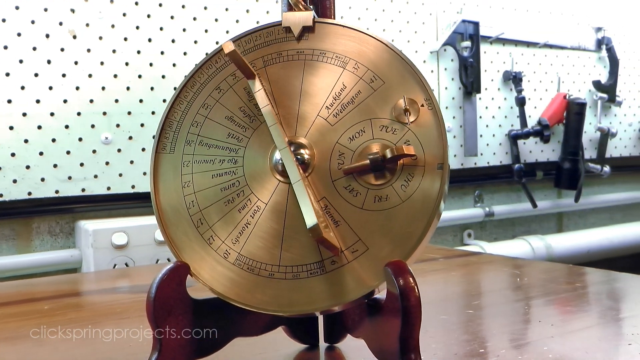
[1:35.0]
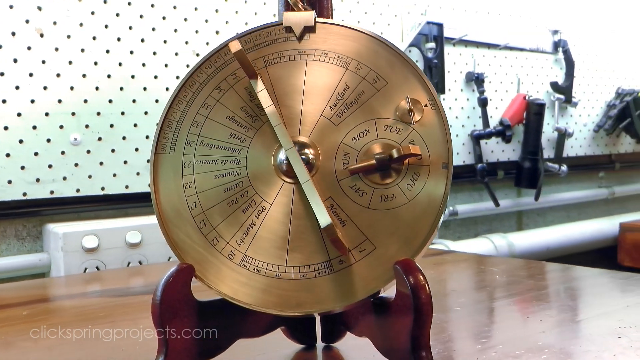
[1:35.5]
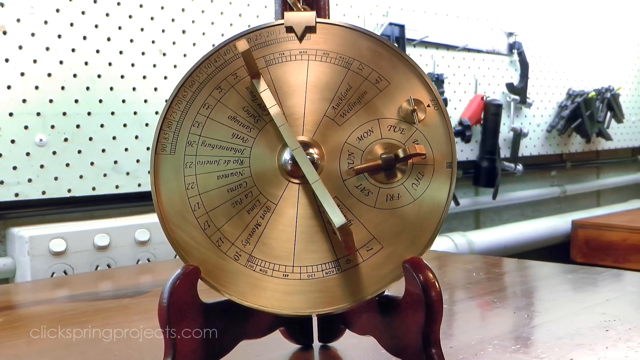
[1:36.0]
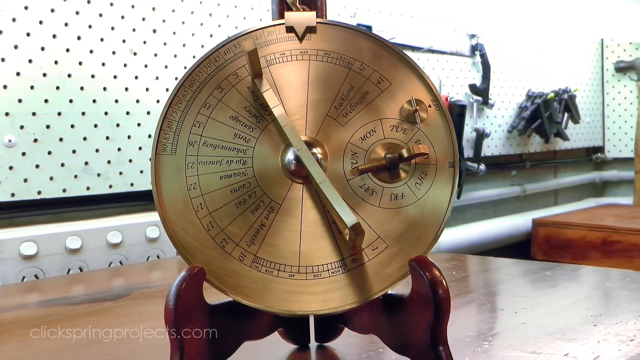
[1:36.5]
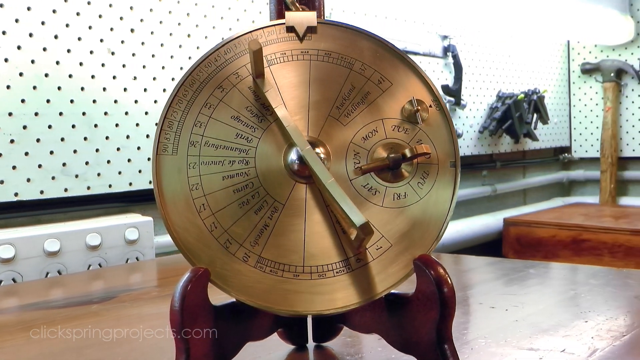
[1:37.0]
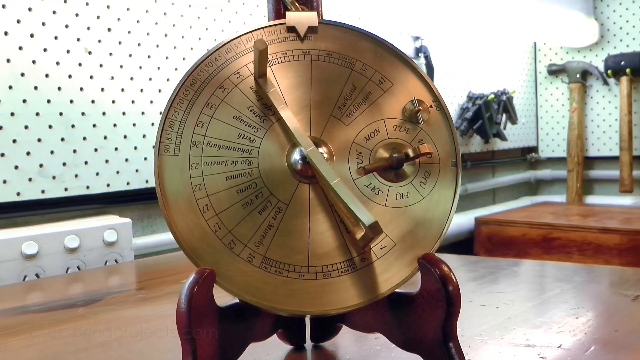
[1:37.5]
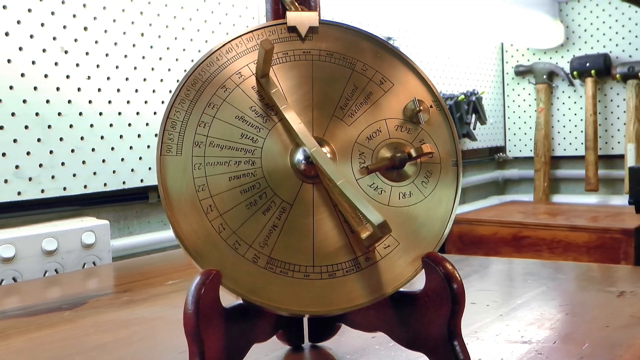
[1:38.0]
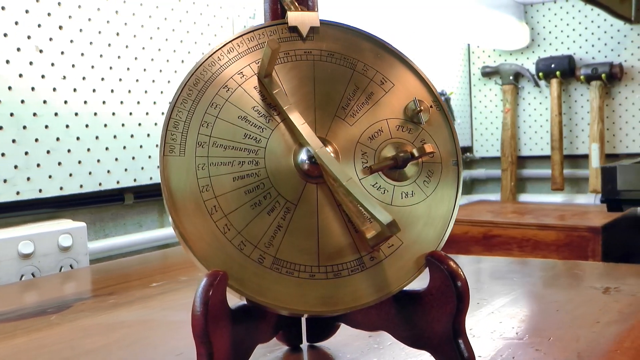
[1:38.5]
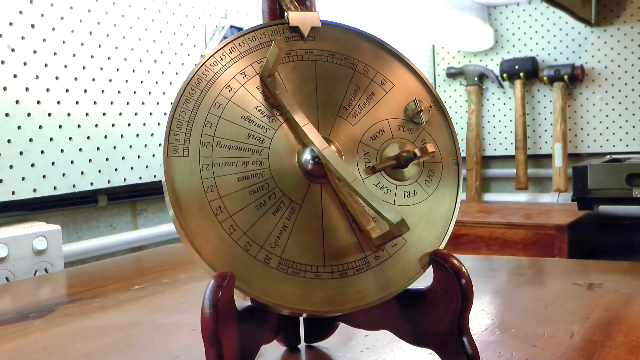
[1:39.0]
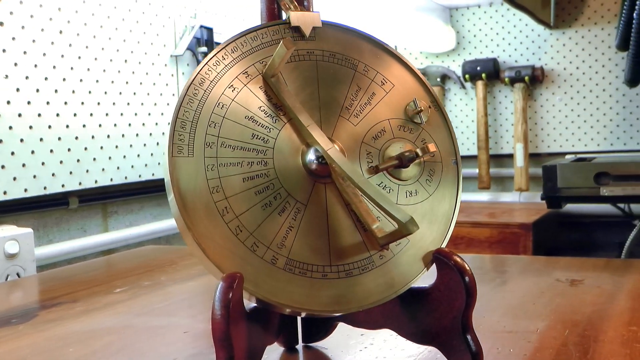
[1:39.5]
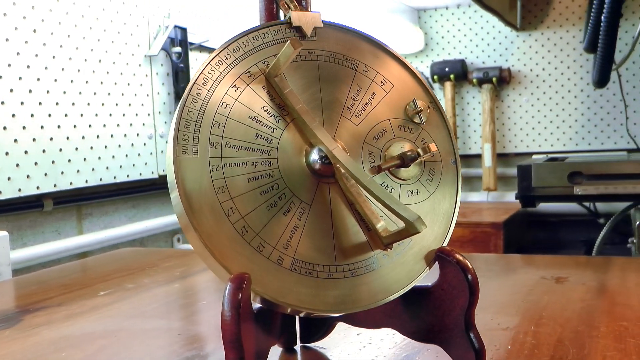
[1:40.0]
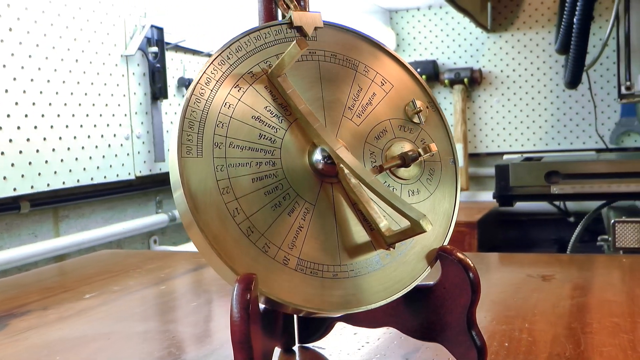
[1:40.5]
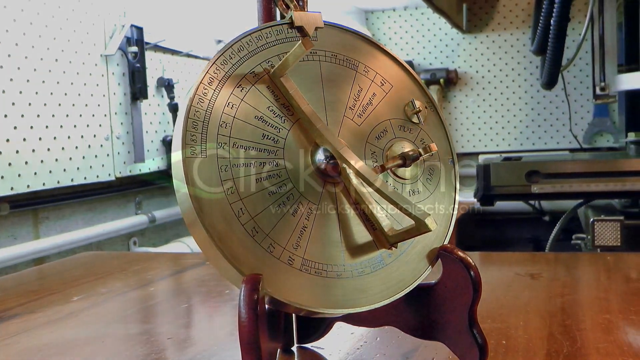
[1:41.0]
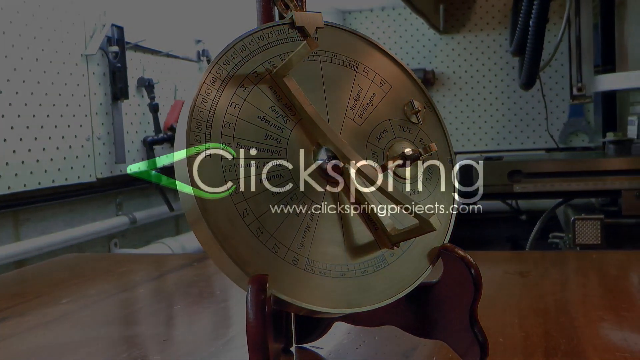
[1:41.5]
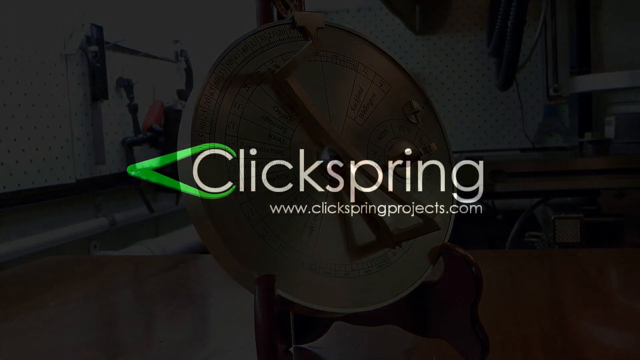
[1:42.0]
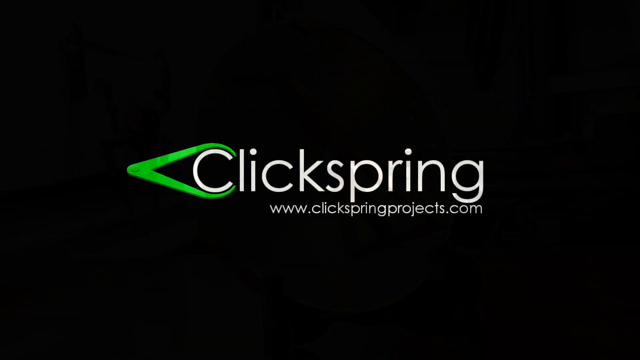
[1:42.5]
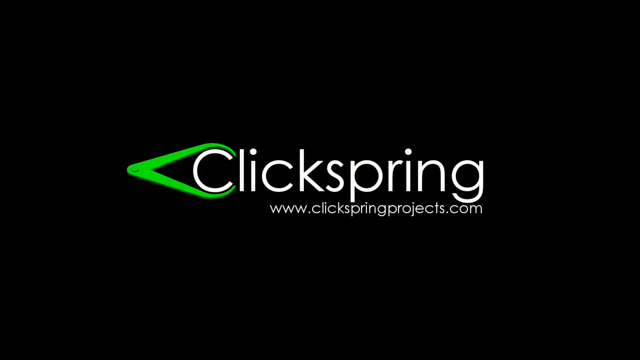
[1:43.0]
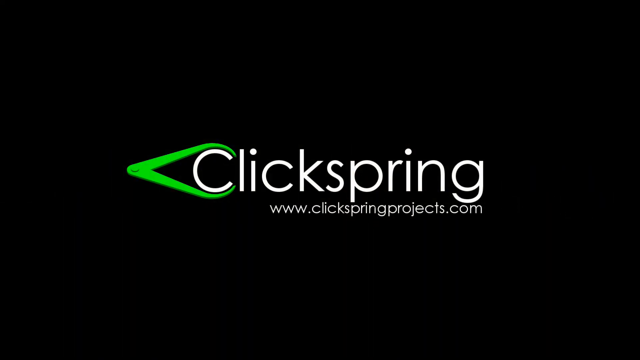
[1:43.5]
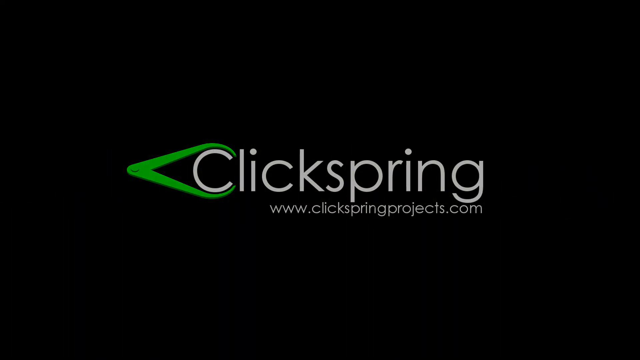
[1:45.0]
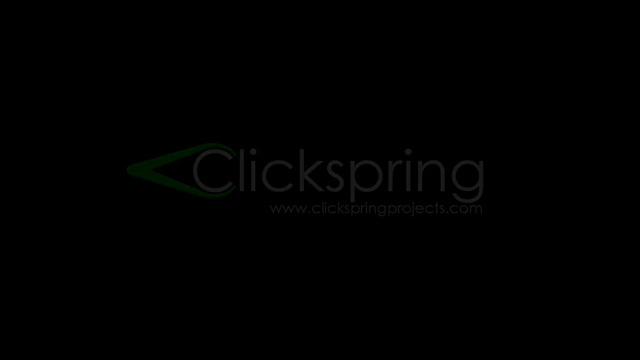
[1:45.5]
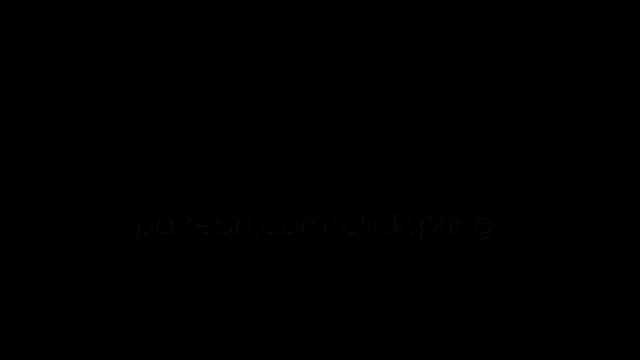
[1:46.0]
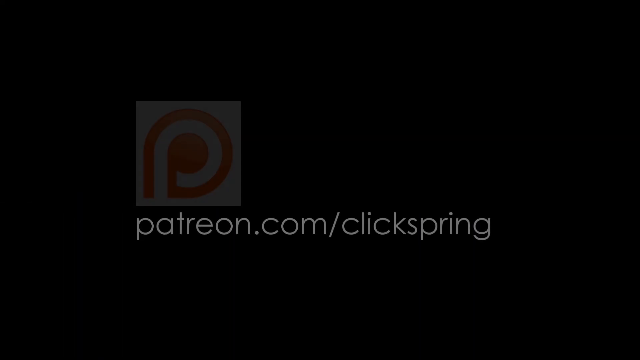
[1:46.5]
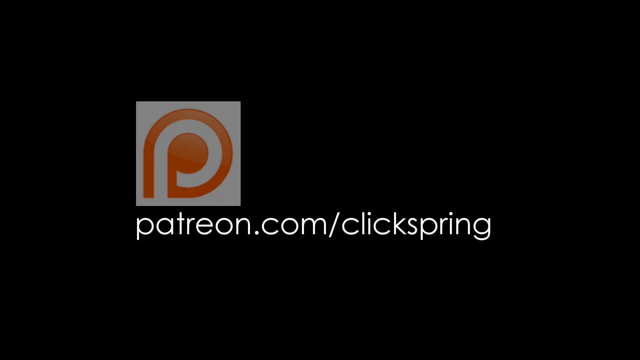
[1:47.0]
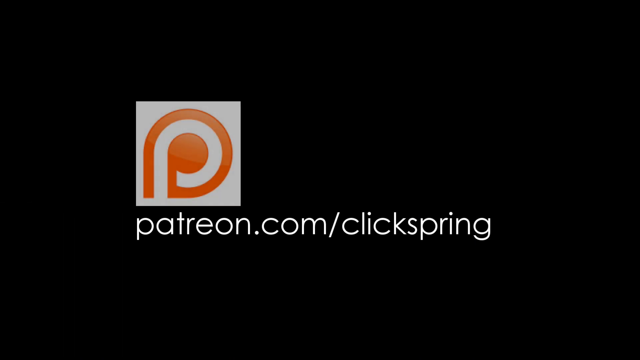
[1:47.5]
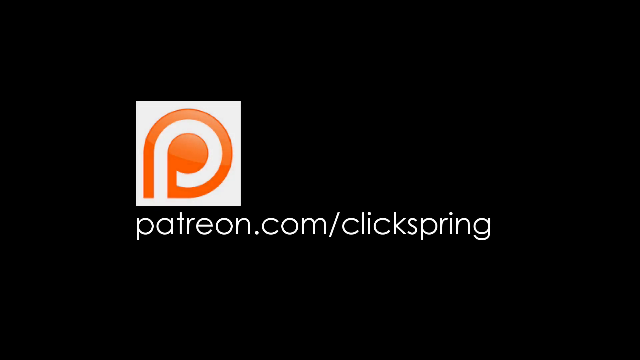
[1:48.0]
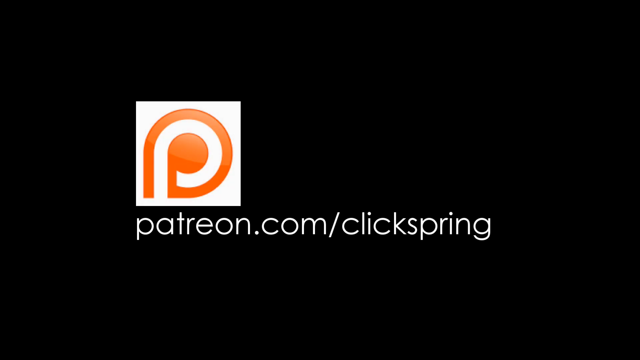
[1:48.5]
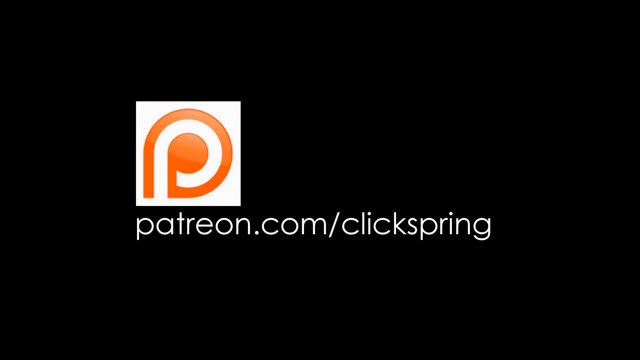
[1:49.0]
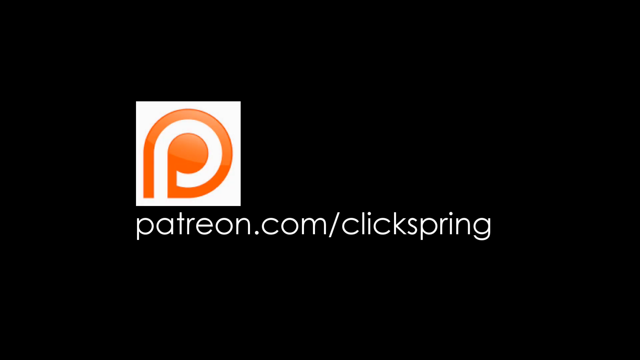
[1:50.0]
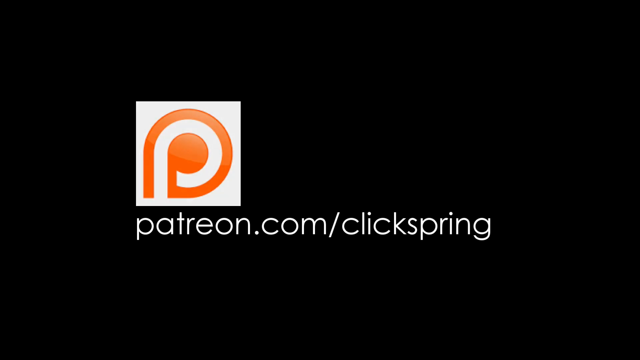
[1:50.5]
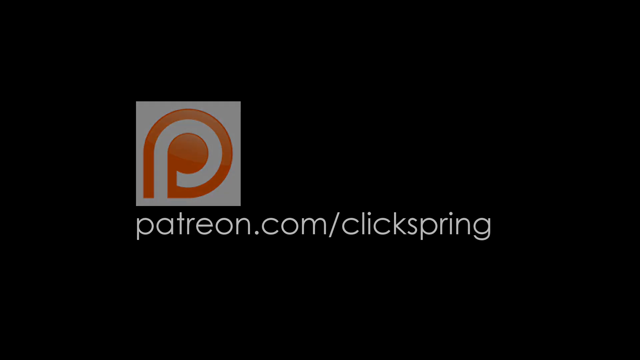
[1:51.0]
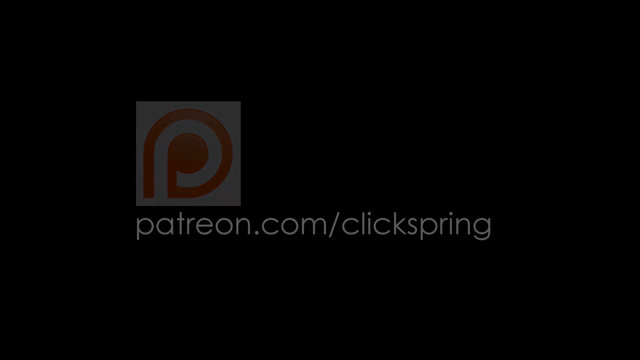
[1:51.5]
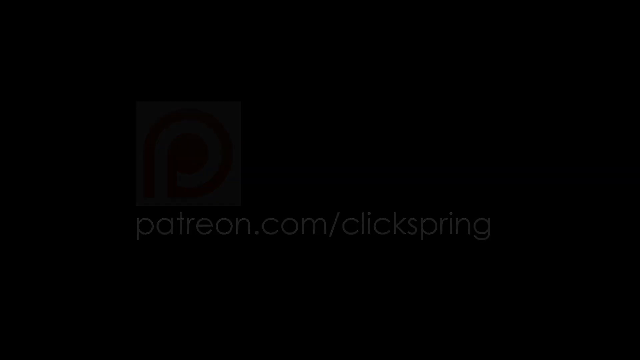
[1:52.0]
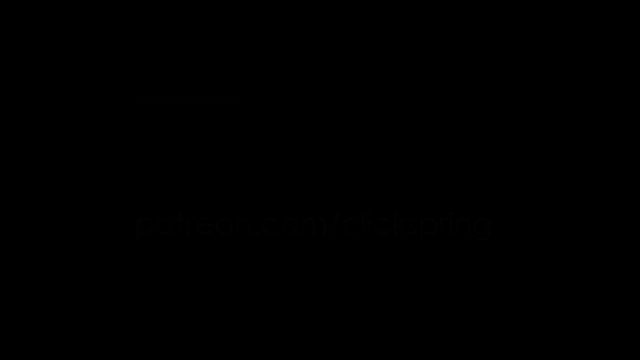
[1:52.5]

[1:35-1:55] A 360-degree view shows the Byzantine sundial calendar sitting on a table, displayed prominently with hammers in the background and a wall with tiny holes, followed by the part of the calendar with the locations, numbers and days of the week. The end of the video shows, in white writing, that it is brought to you by "Clickspring", www.clickspringprojects.com, and "patreon.com/clickspring". The video then fades to black.